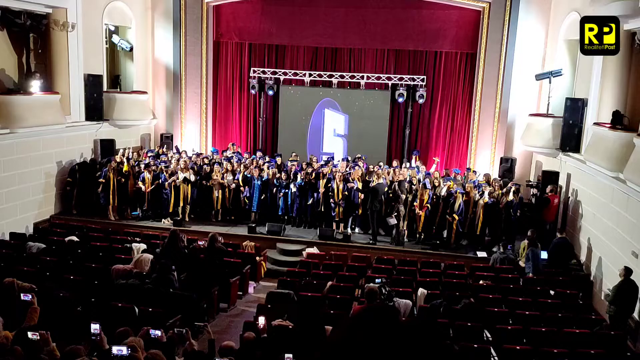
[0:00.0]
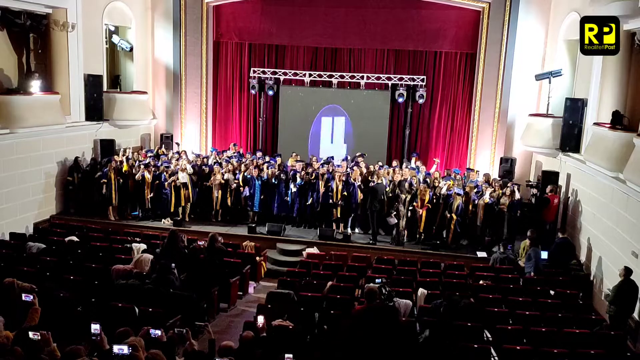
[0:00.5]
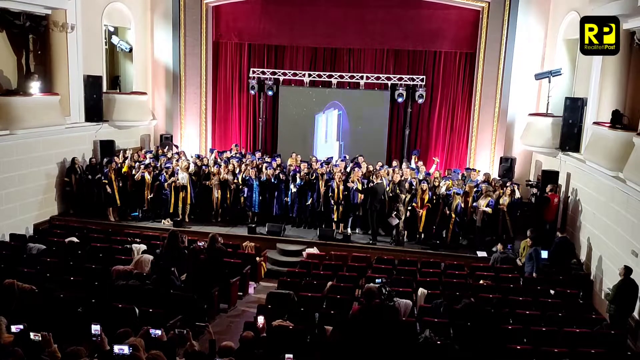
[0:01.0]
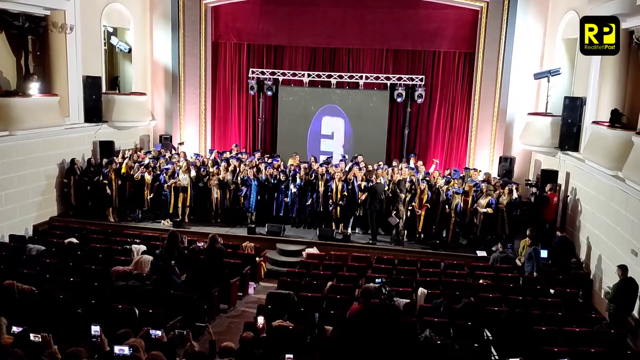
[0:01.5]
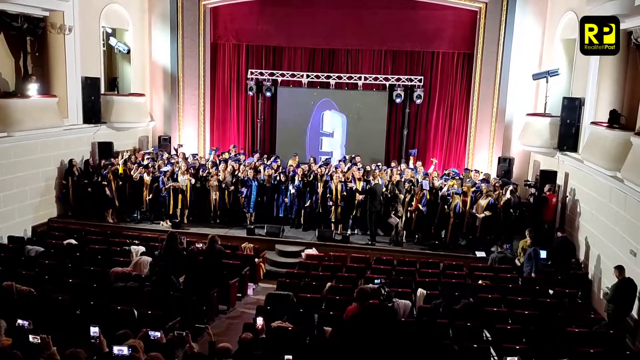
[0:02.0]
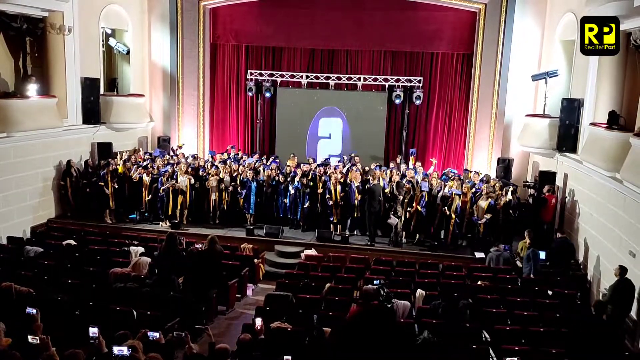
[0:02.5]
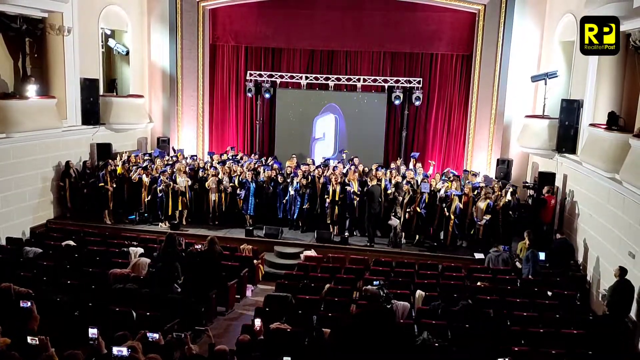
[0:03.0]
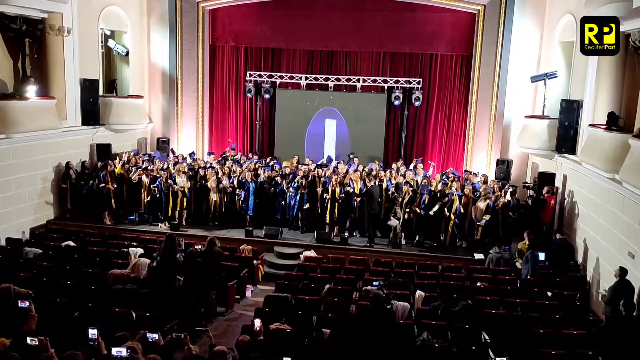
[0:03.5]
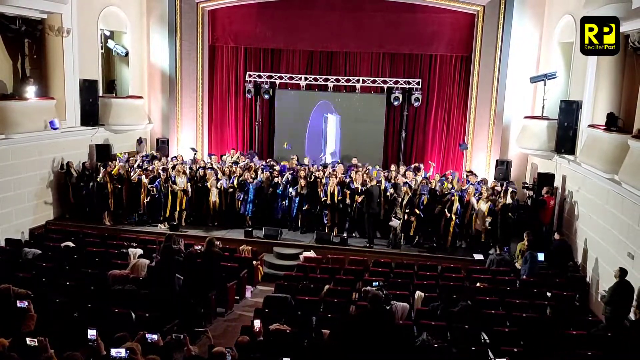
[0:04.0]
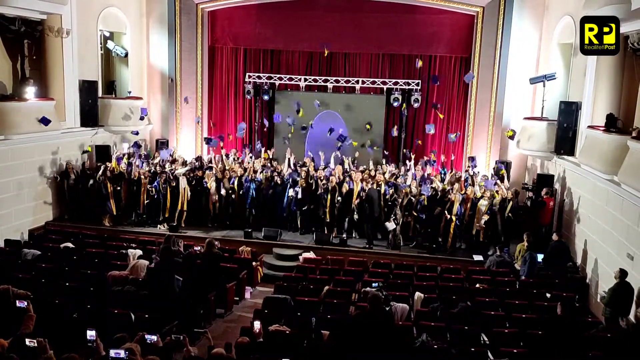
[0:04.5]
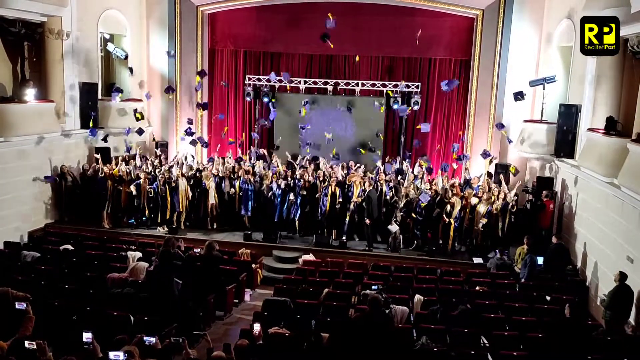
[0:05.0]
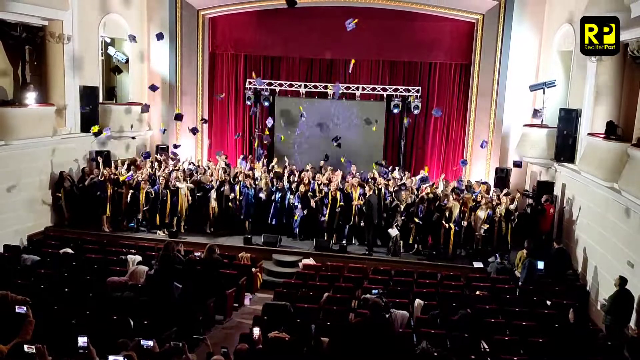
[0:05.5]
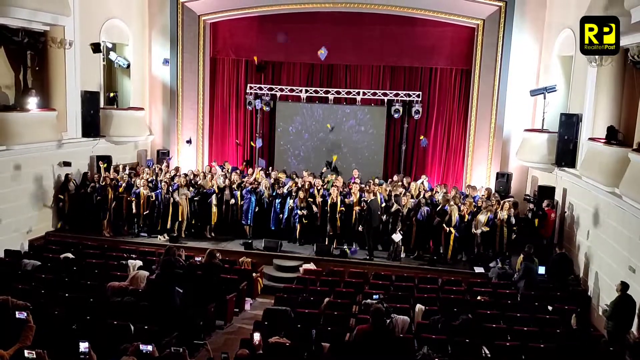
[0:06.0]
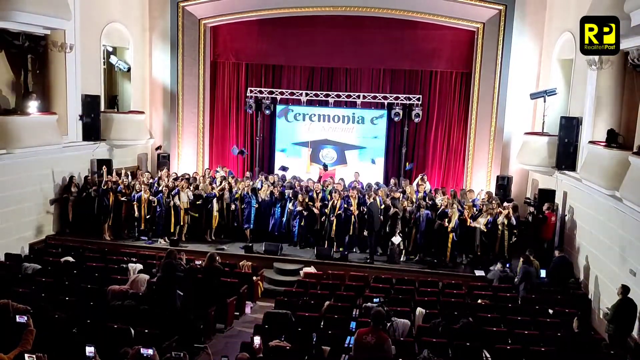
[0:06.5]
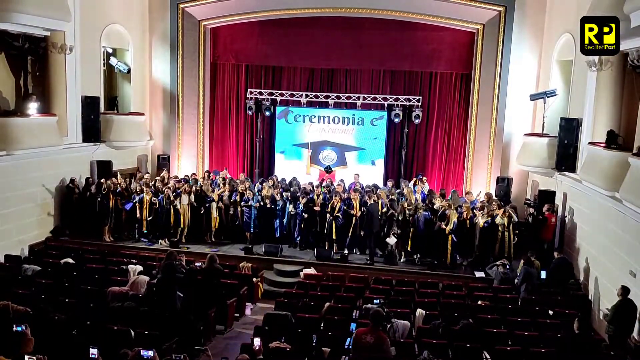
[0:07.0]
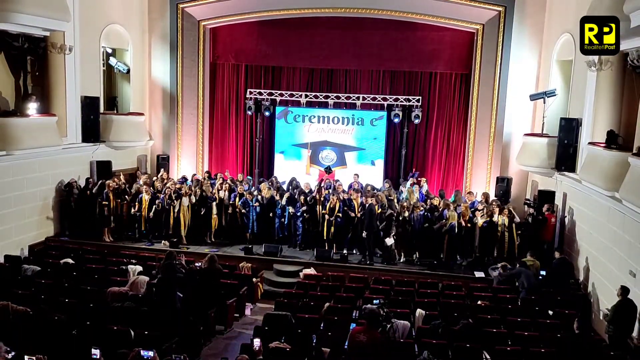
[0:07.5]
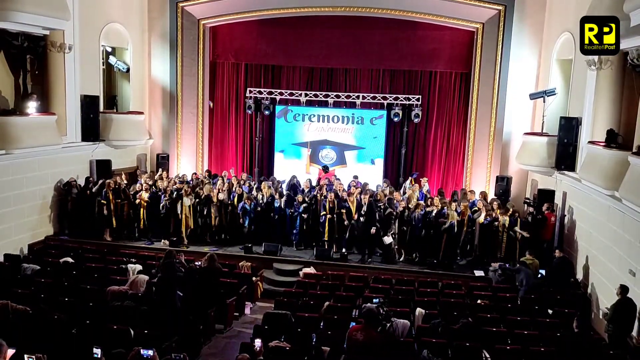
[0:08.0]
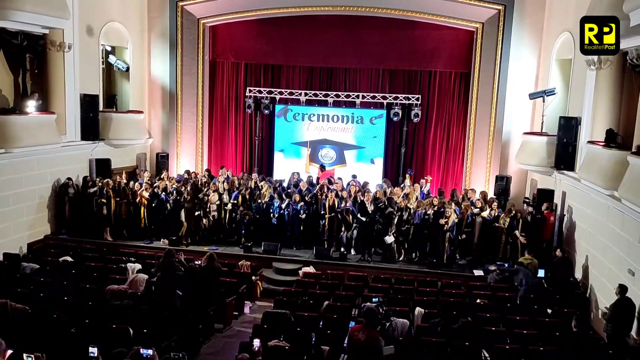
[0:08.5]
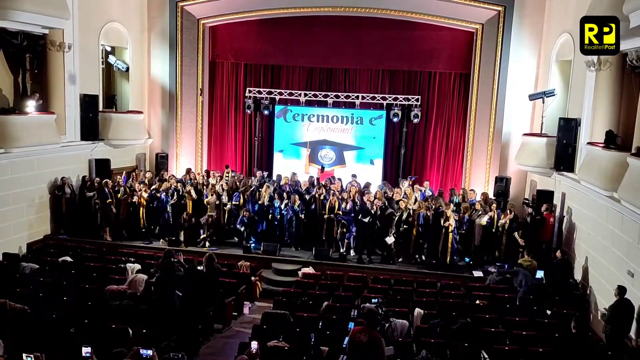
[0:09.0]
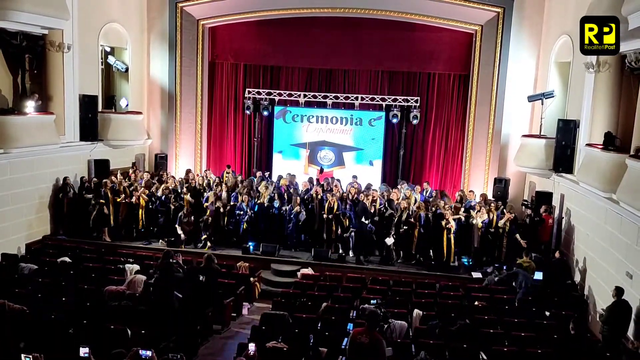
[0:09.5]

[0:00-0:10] A giant auditorium is shown, with what looks like a group of graduates on stage. People are sitting sporadically in the audience, and there are many empty seats. The stage has a giant red curtain at the back, and the seats are also red, matching the curtain. A giant screen behind the graduates shows a countdown, and once it reaches one, the celebration begins: the graduates all throw their purple hats up into the air. Several cameras alongside point from high up down toward the graduates.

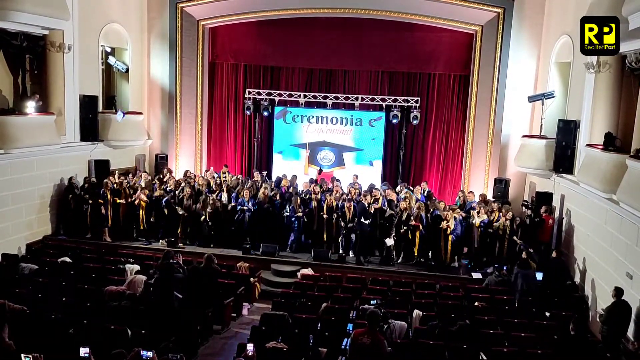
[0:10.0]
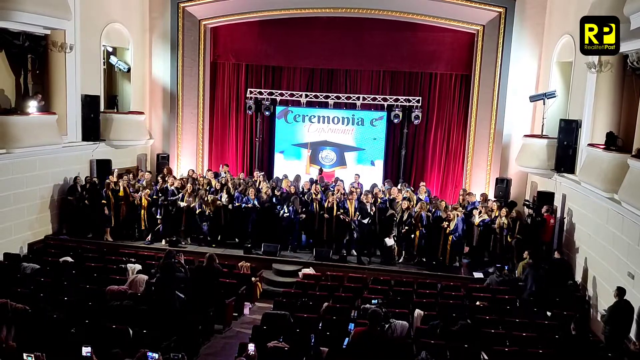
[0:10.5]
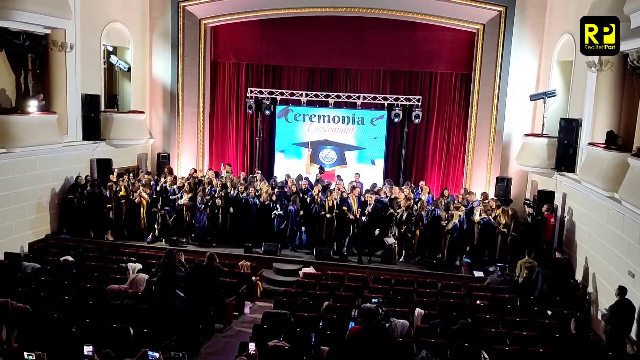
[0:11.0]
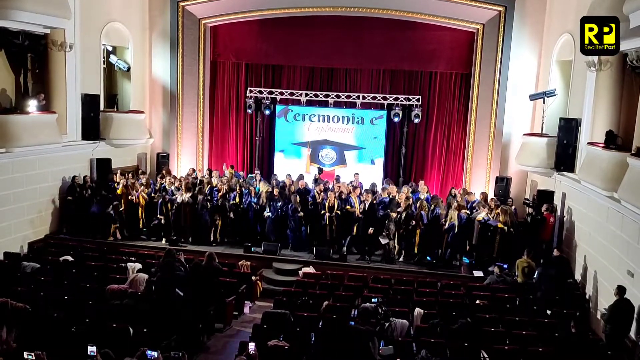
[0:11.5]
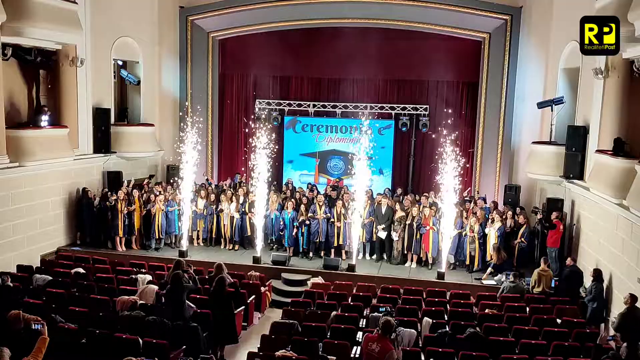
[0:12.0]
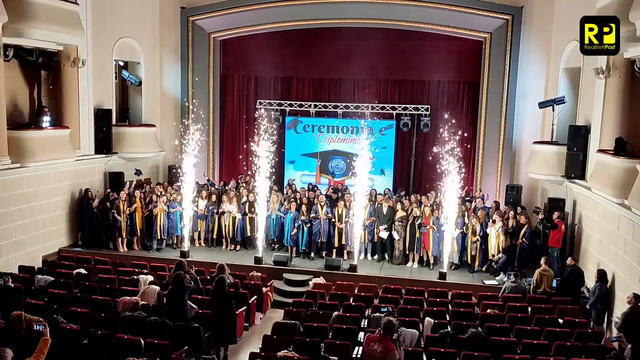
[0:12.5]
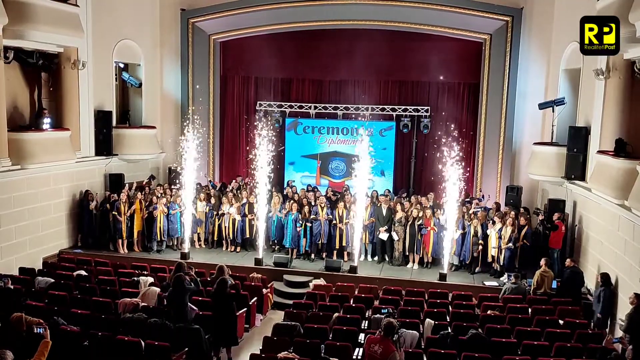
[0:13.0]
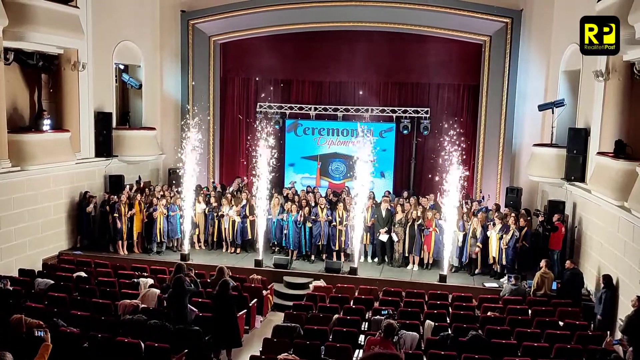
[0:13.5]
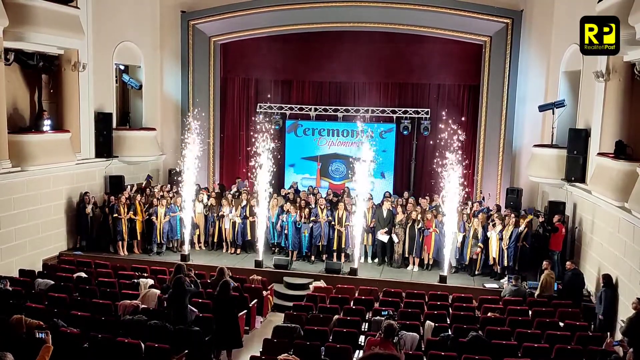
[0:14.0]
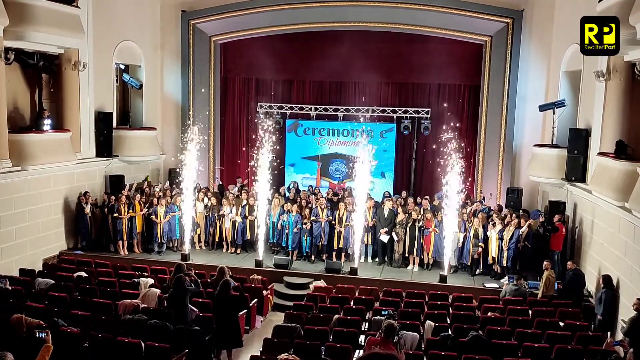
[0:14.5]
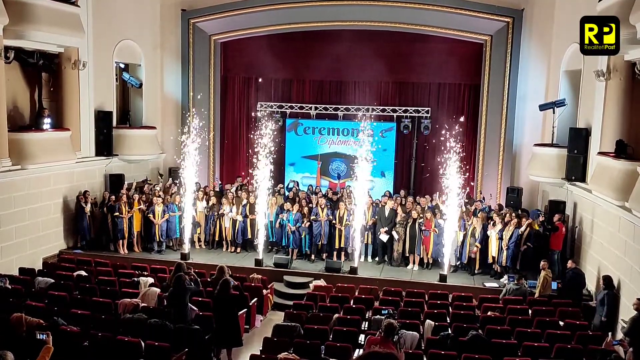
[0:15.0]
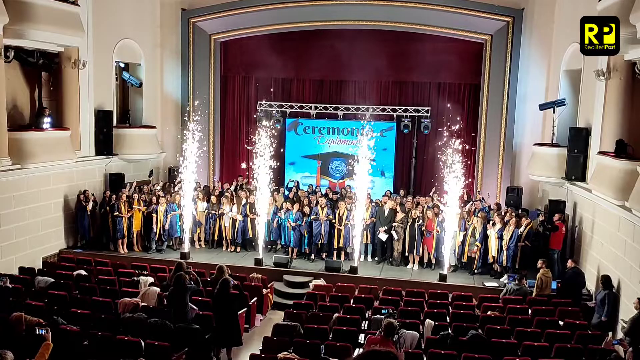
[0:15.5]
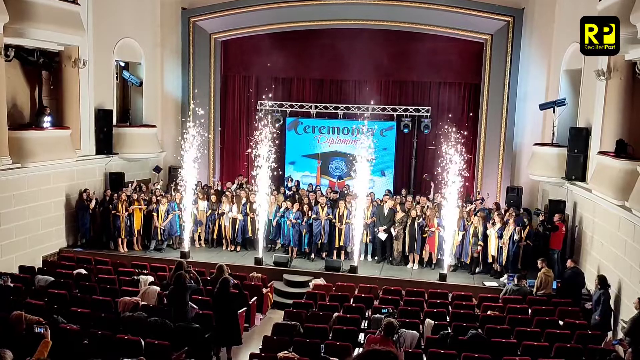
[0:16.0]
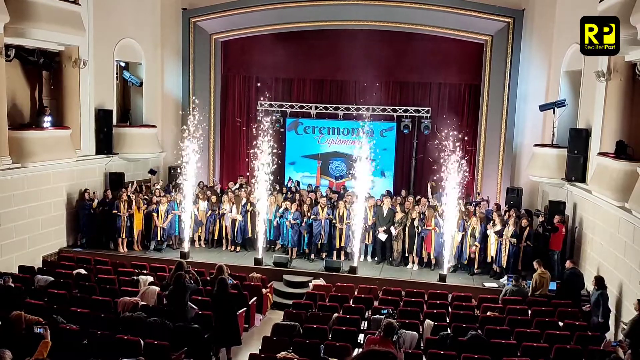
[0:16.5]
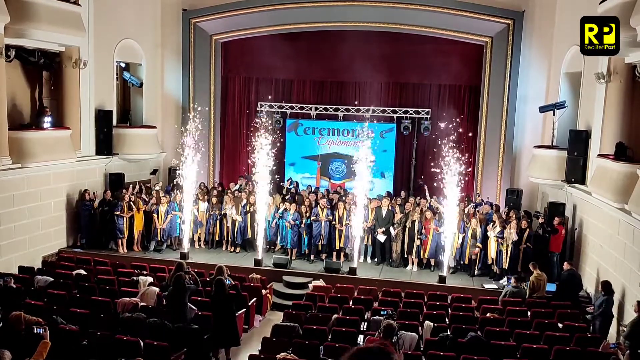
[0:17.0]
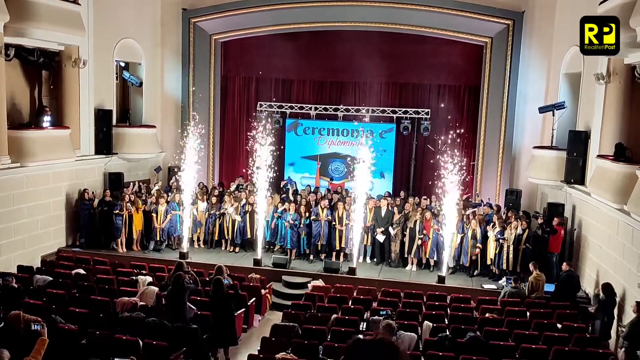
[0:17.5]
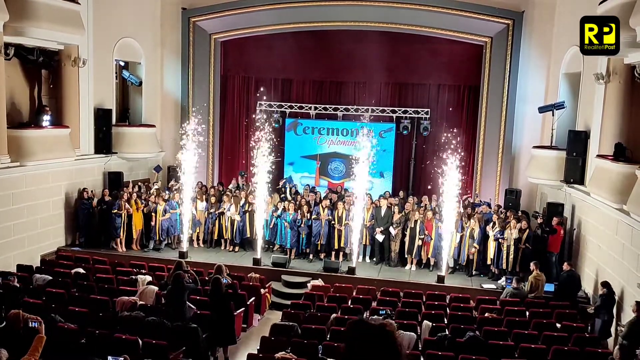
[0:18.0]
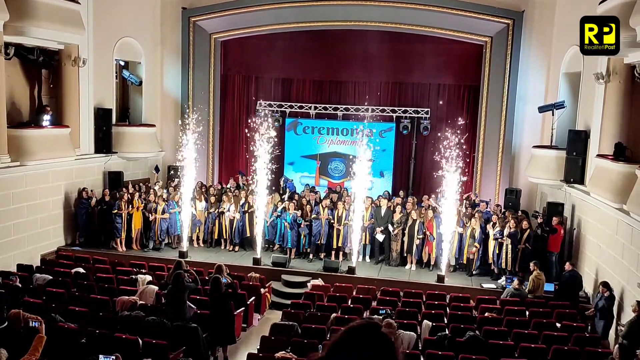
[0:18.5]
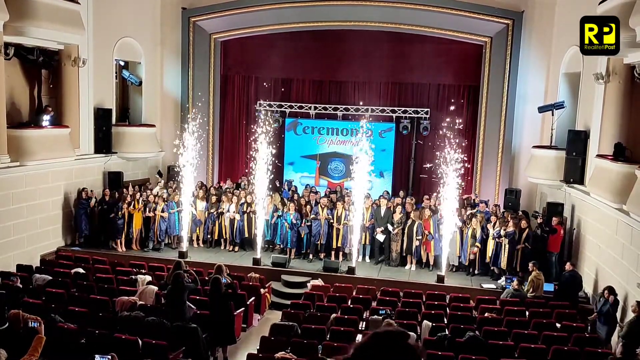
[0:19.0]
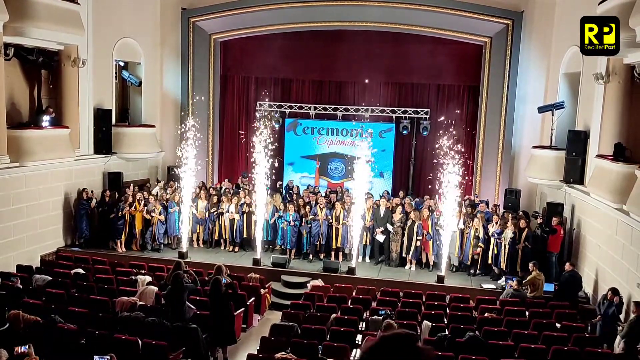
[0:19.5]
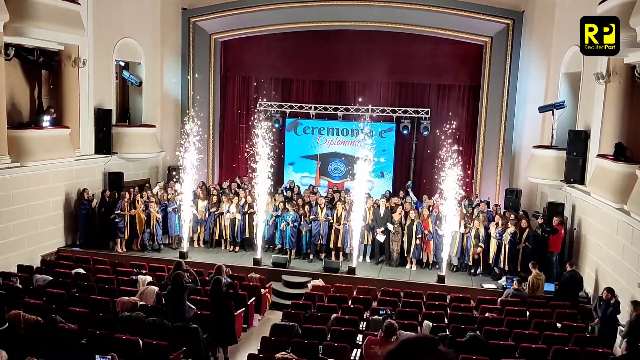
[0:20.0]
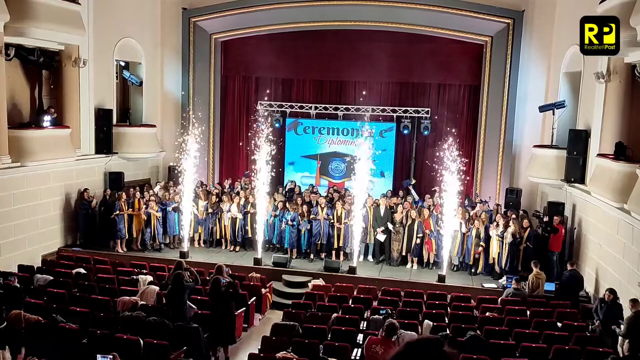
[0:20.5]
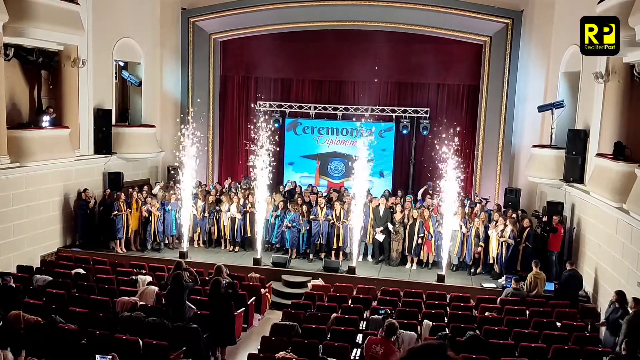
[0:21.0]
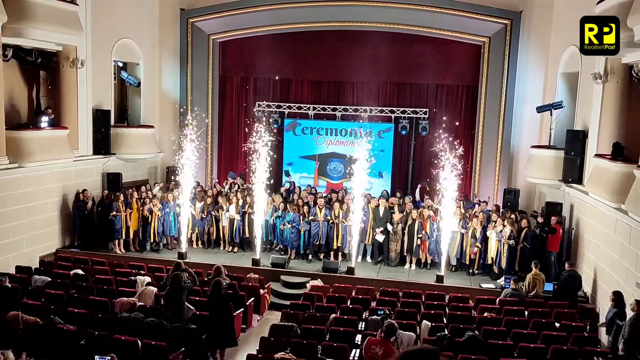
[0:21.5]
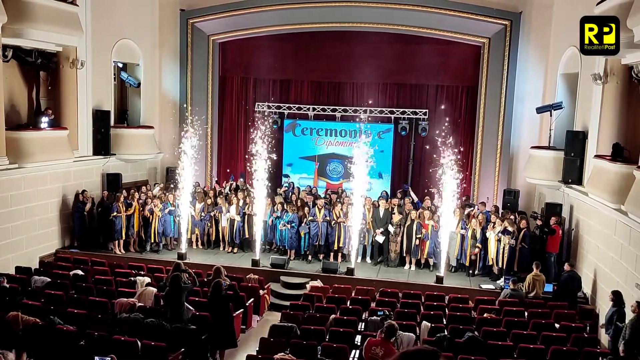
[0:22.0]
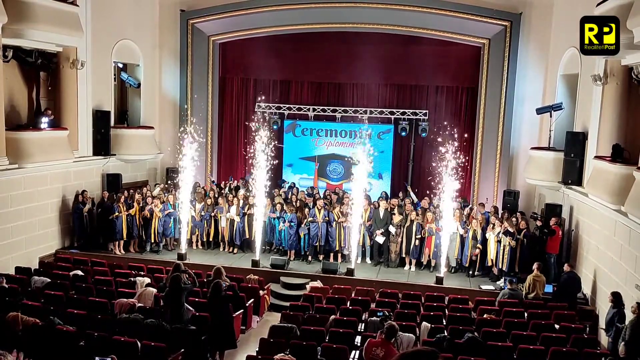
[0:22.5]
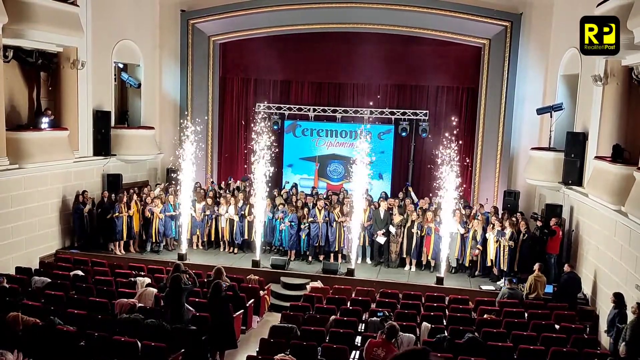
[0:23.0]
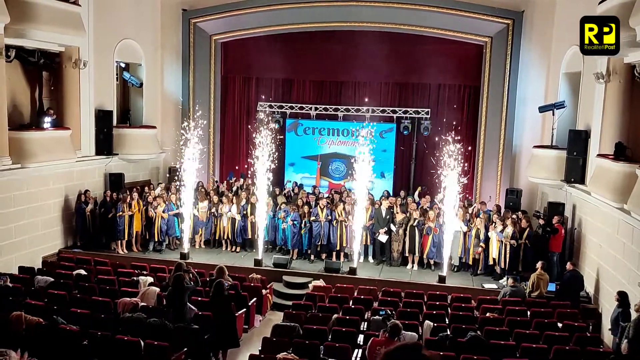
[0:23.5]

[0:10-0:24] People are gathered in an auditorium for what looks like a graduation. There is an audience, but many of the seats are empty. The stage the graduates are on is completely filled with people. A big screen behind them says "CERMONIA" with a graduation hat pictured, and the backdrop is a large red curtain. Some graduates wave their hats, and four fireworks shoot straight up into the air. There are two speakers on the right and left sides, as well as two cameras up high on the right and left sides recording the event.